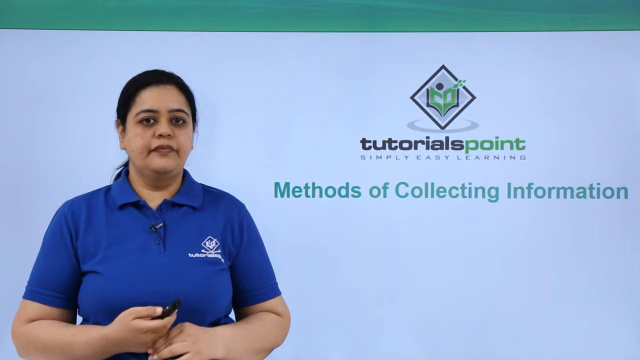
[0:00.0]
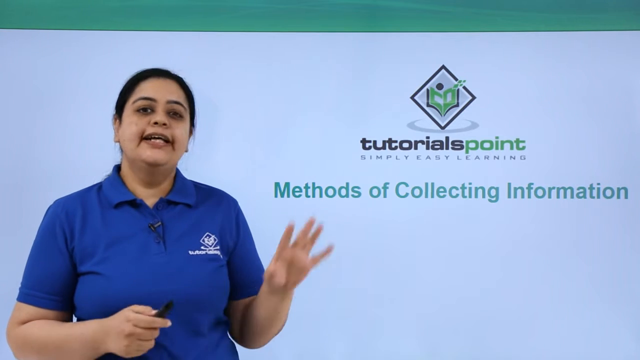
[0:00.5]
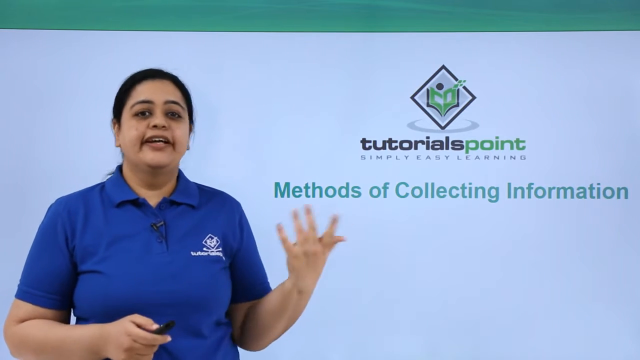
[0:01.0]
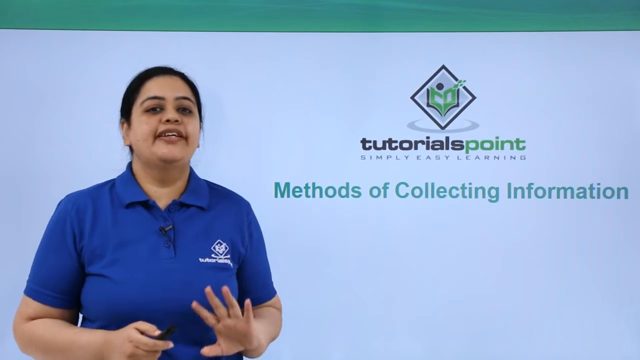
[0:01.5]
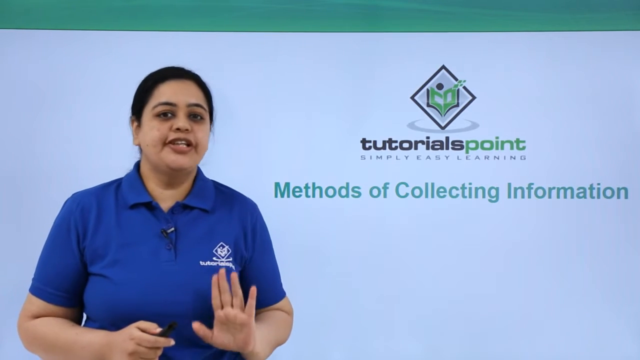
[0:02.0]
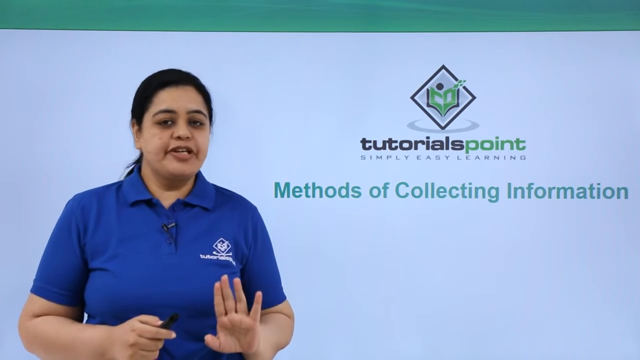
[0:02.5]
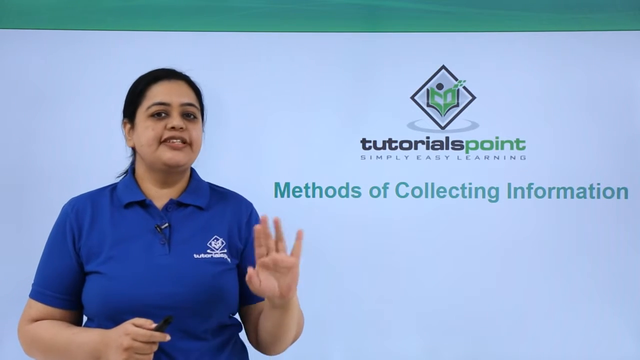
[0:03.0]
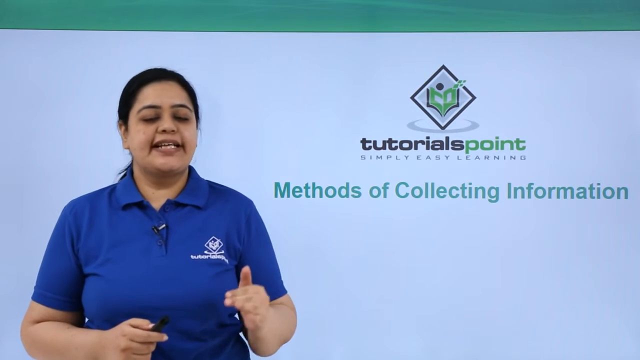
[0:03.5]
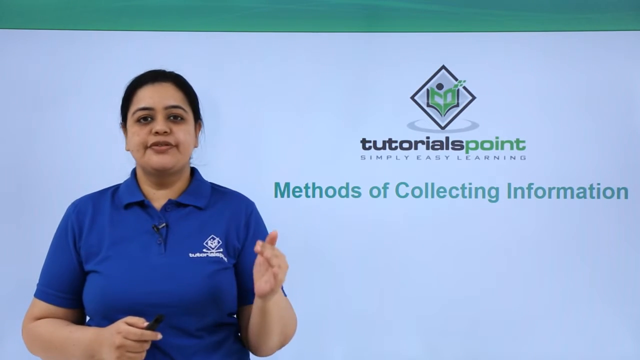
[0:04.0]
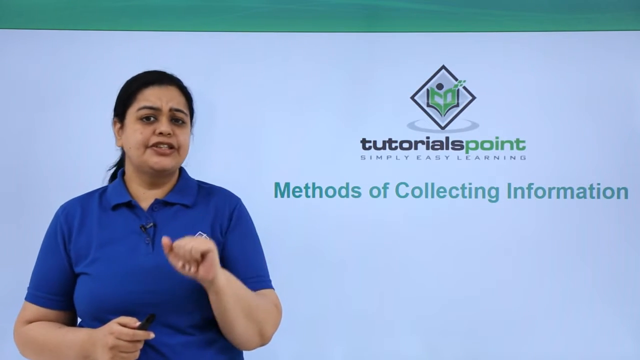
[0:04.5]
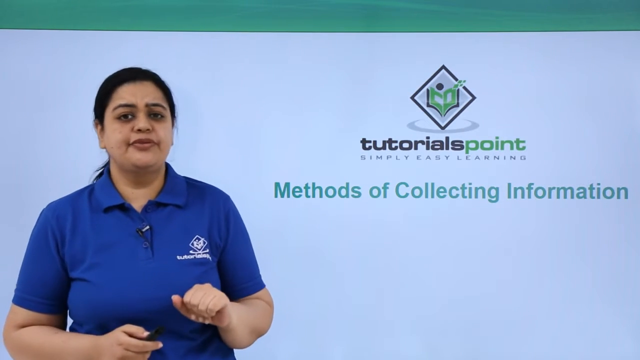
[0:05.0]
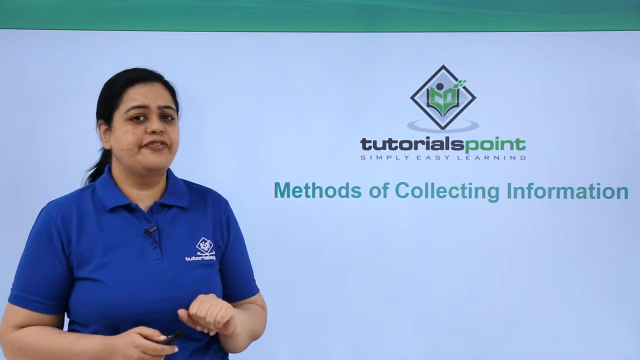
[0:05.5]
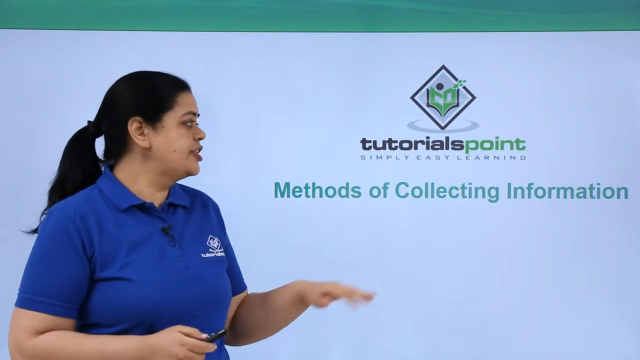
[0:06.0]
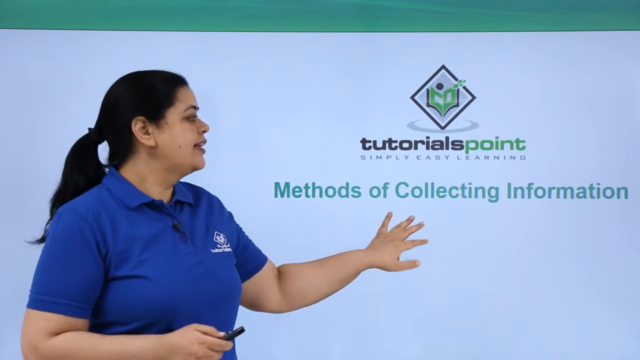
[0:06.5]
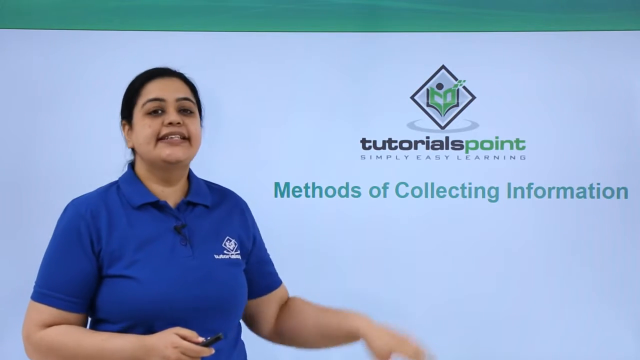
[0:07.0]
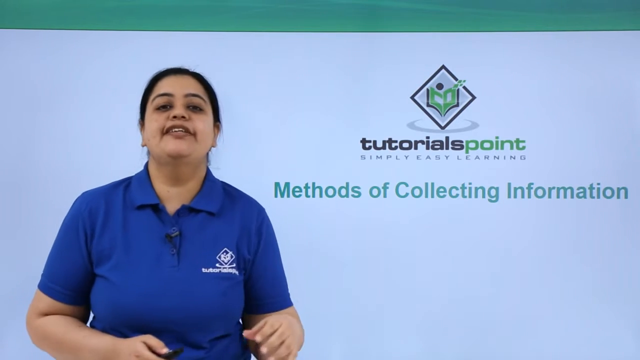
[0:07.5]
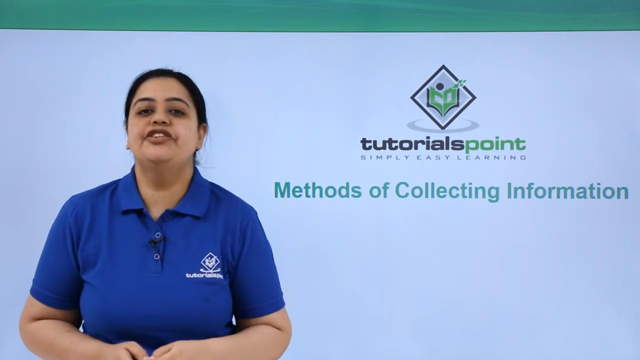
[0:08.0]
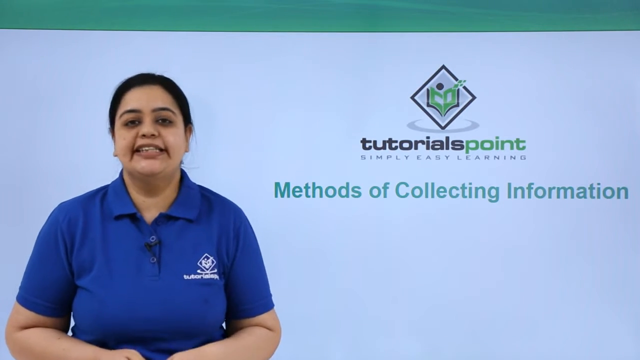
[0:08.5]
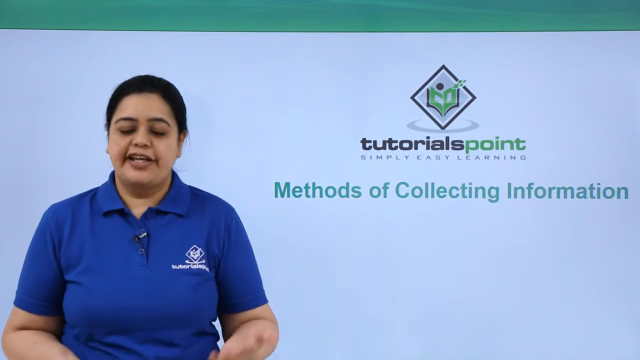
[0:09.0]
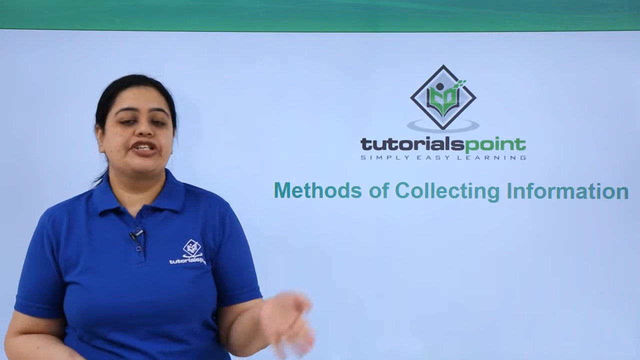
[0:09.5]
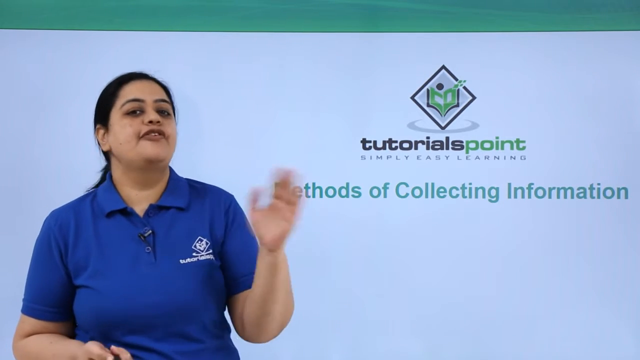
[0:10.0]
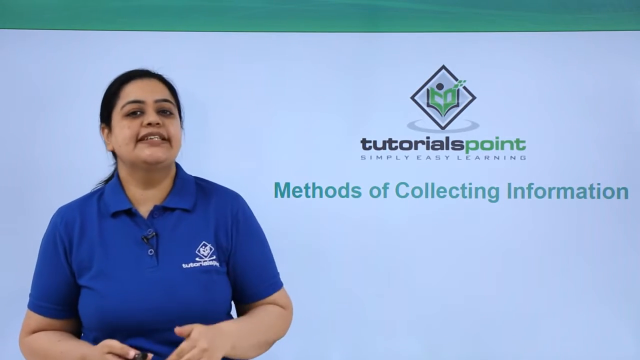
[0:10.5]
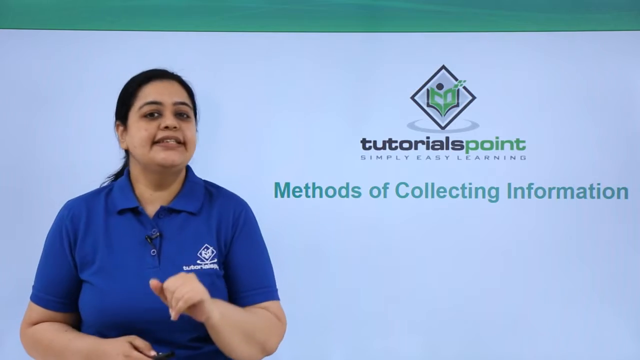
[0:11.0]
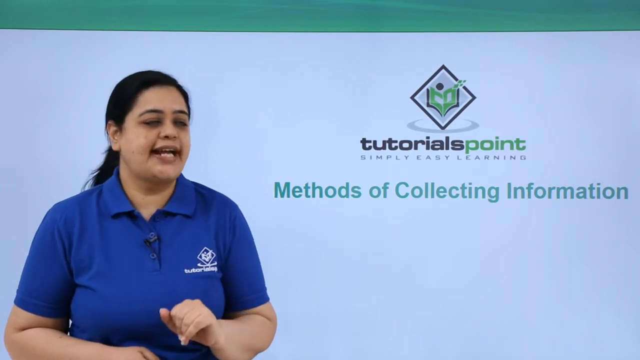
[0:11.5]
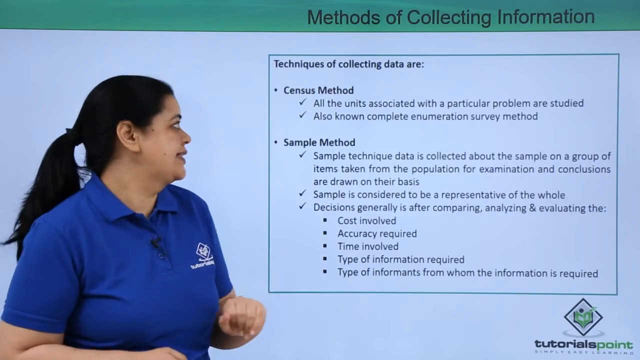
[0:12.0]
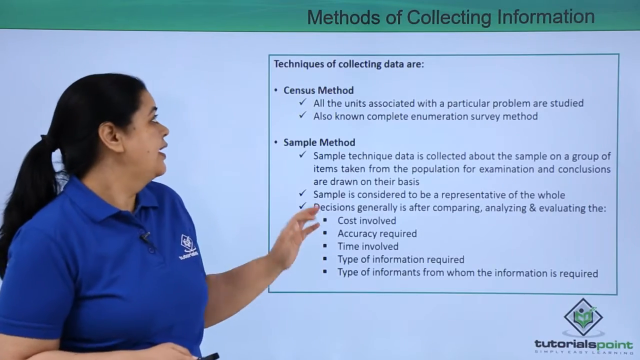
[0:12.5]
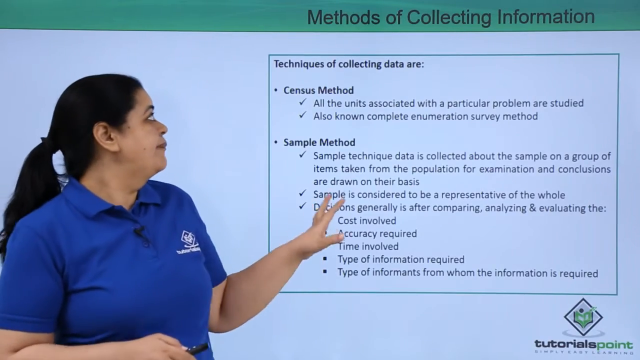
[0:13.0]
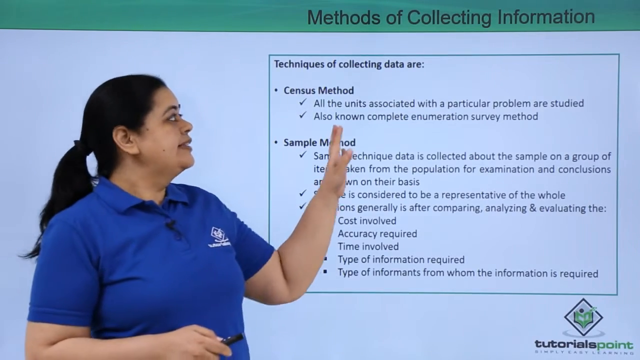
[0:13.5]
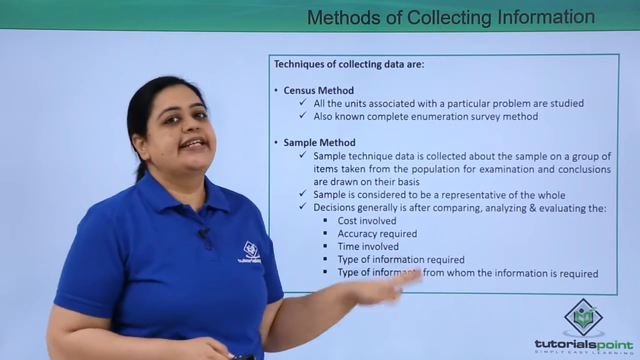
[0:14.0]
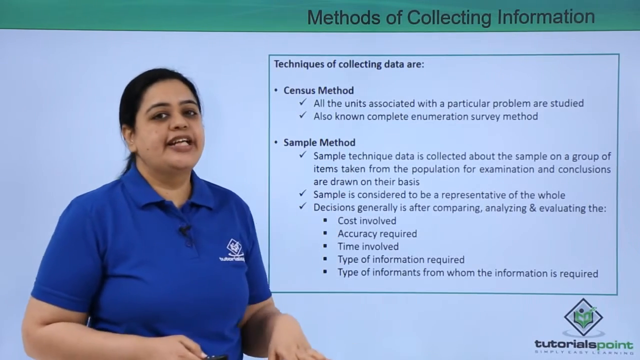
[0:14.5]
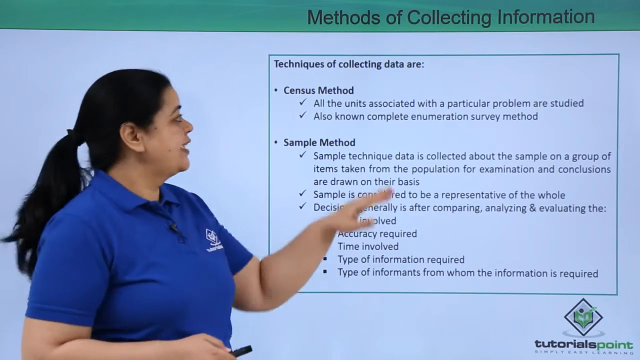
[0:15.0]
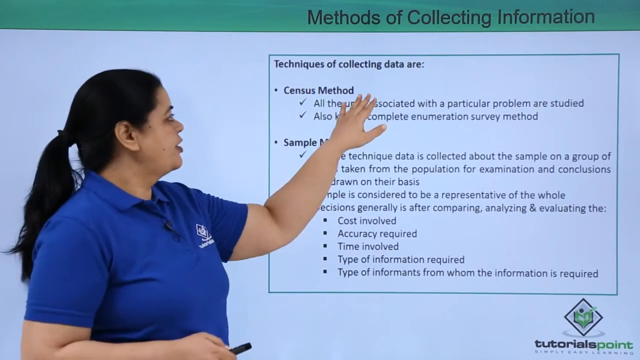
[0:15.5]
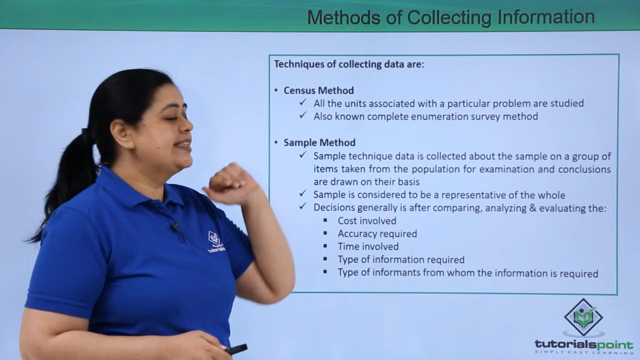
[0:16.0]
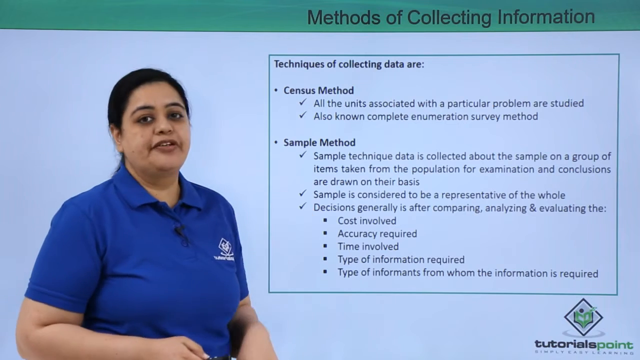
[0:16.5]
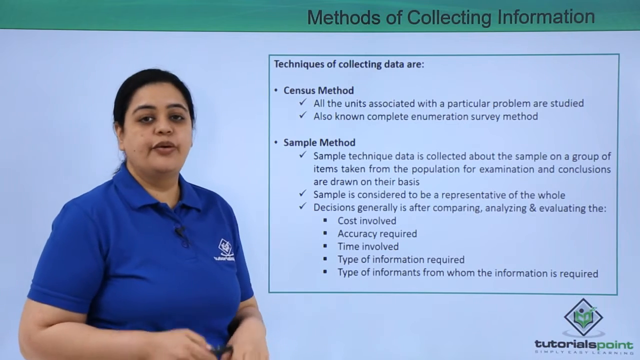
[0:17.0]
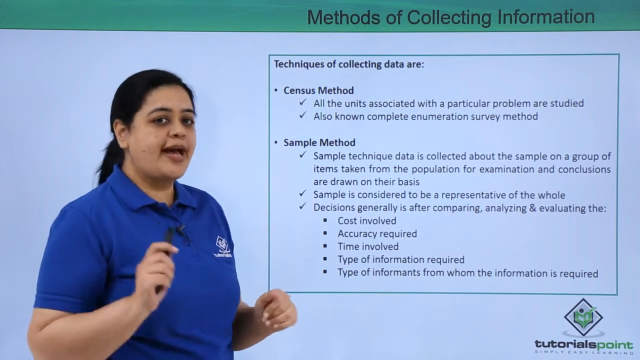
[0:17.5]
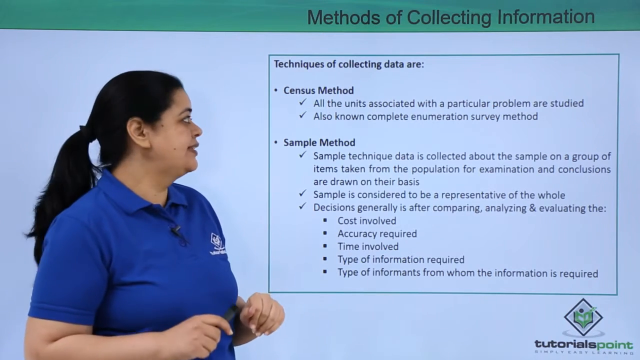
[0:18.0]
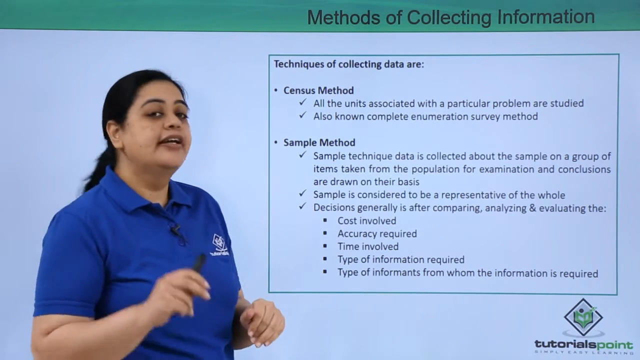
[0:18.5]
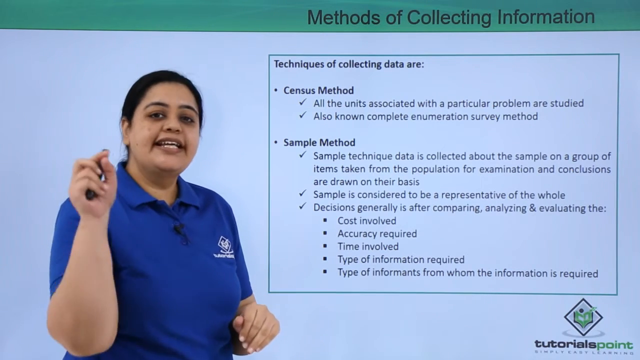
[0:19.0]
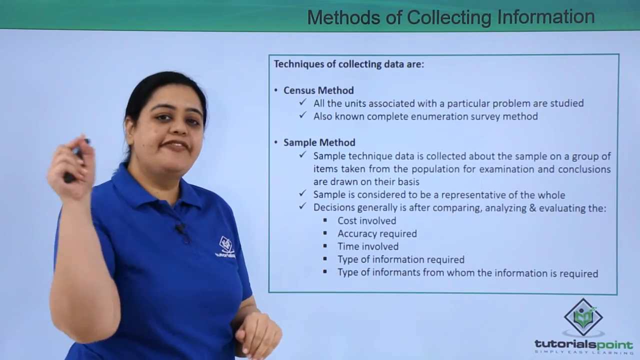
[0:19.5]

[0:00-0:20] A tutorial features a woman who appears to be an instructor and is the only person in the video. She wears a blue uniform shirt, possibly from her company, institution or school. She stands in front of what might be a whiteboard, or maybe a PowerPoint-type presentation. She has black hair pulled back in a low ponytail, is not wearing much makeup, and might be over 30. She is lecturing for Tutorials Point, and she points or gestures toward important points in her lecture. Little changes over the course of the shot.